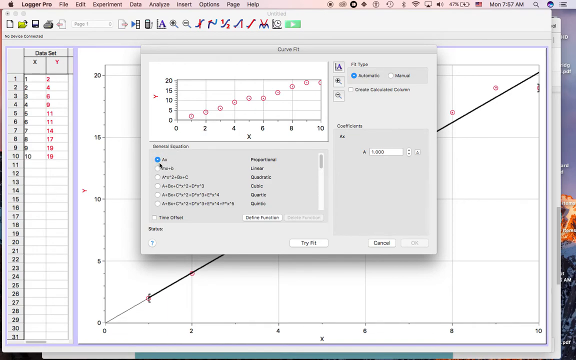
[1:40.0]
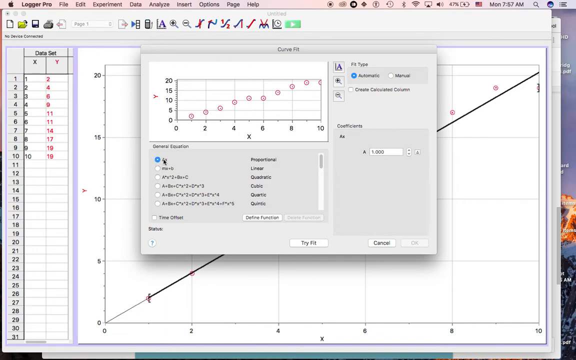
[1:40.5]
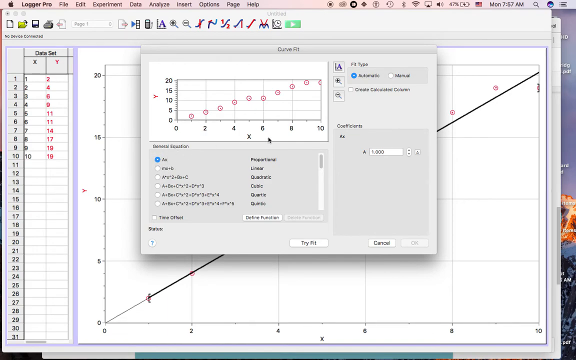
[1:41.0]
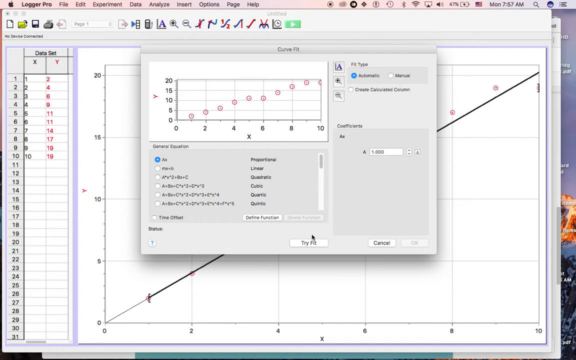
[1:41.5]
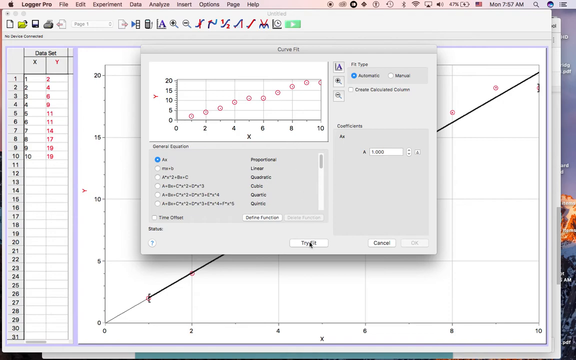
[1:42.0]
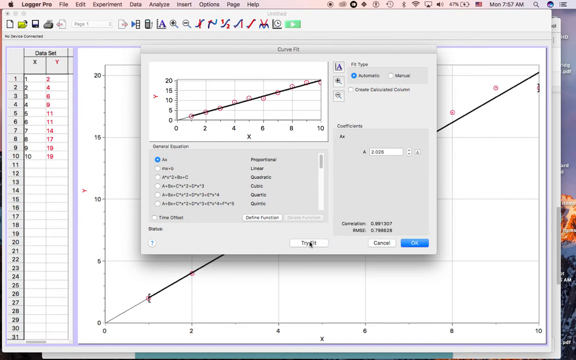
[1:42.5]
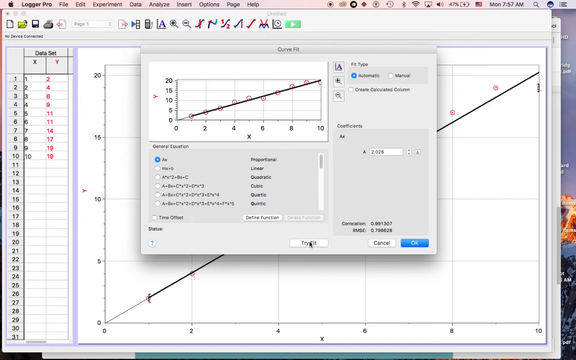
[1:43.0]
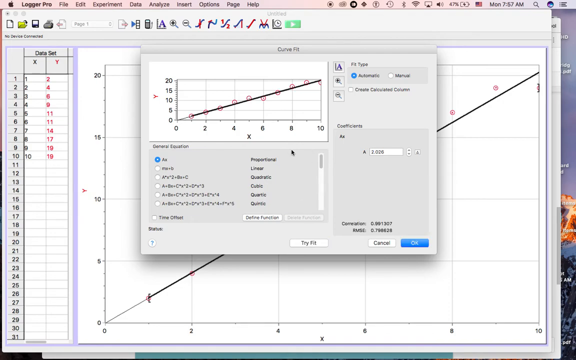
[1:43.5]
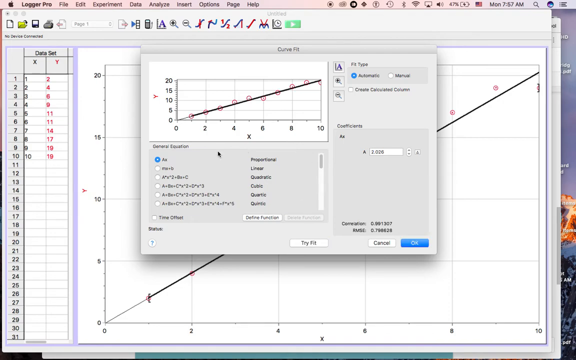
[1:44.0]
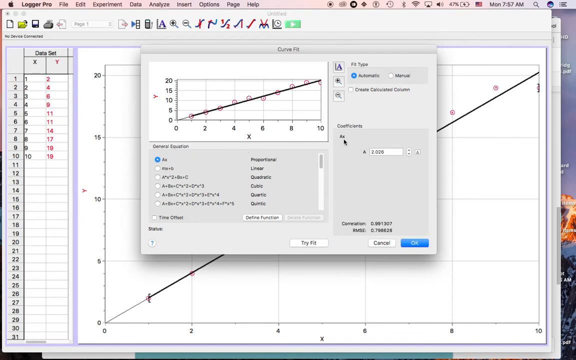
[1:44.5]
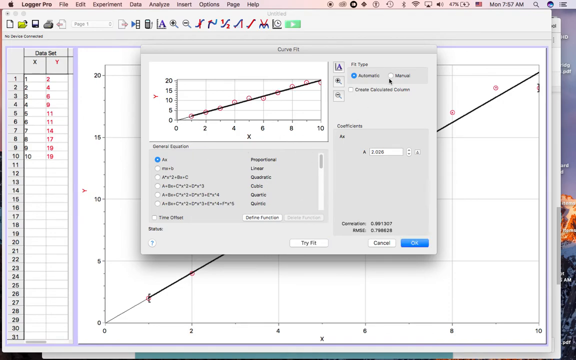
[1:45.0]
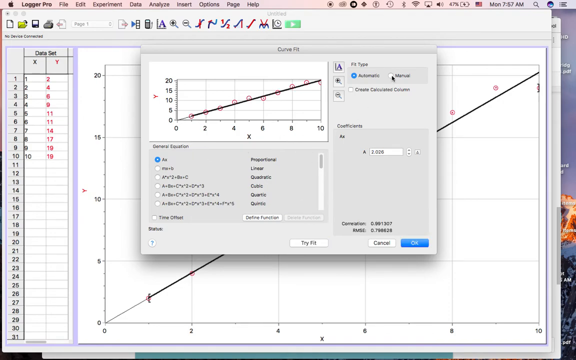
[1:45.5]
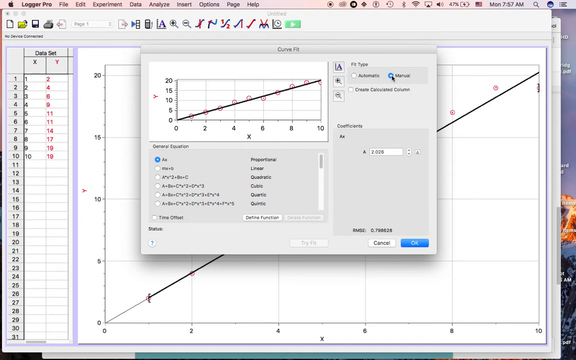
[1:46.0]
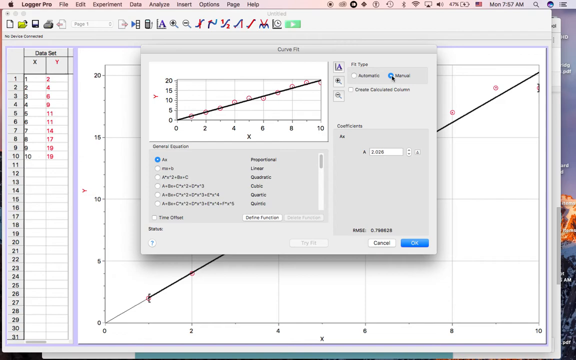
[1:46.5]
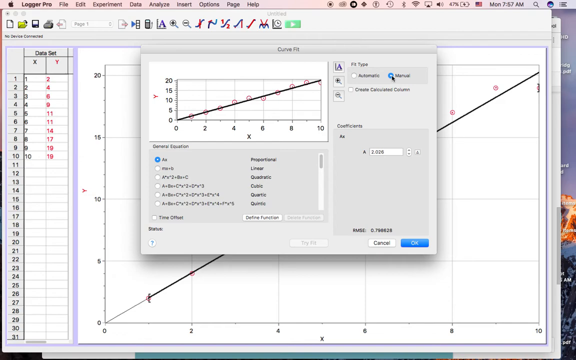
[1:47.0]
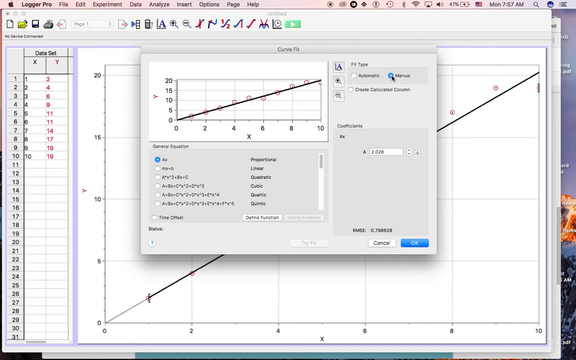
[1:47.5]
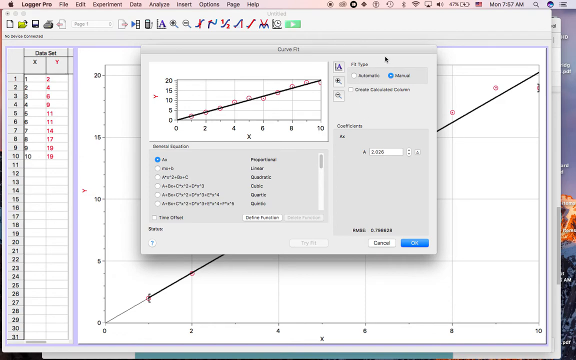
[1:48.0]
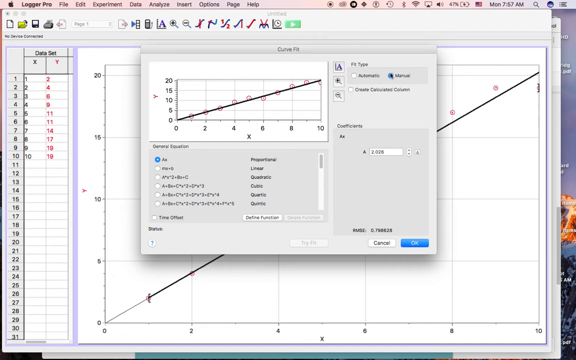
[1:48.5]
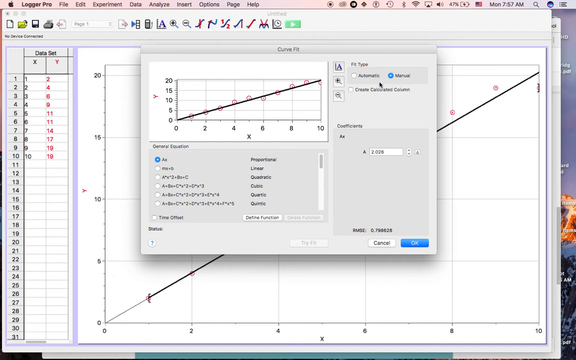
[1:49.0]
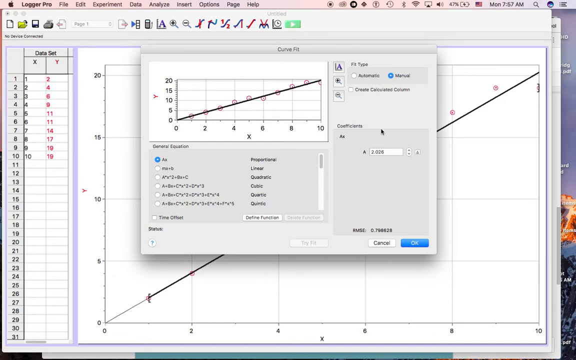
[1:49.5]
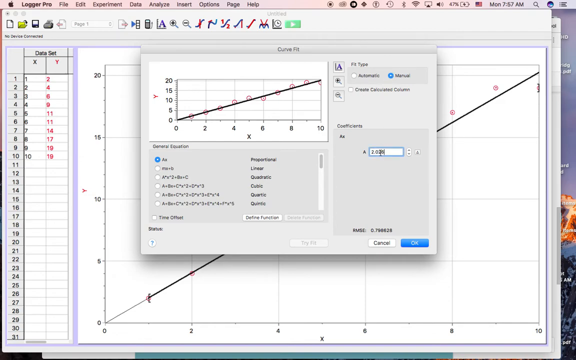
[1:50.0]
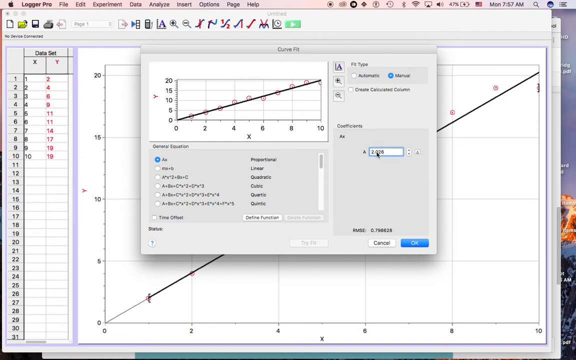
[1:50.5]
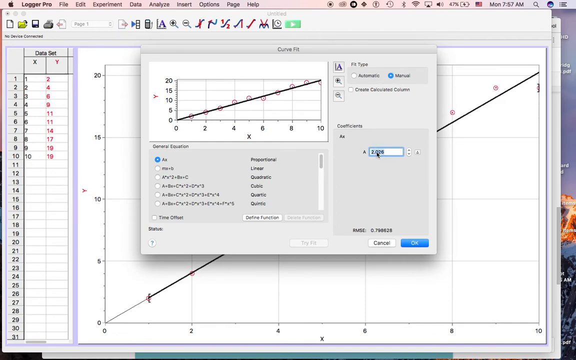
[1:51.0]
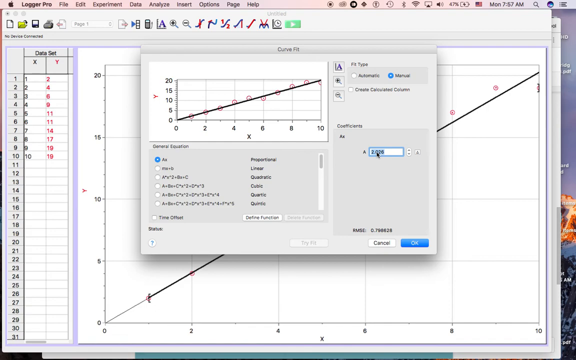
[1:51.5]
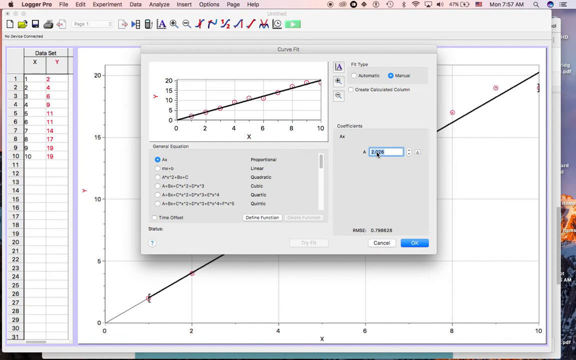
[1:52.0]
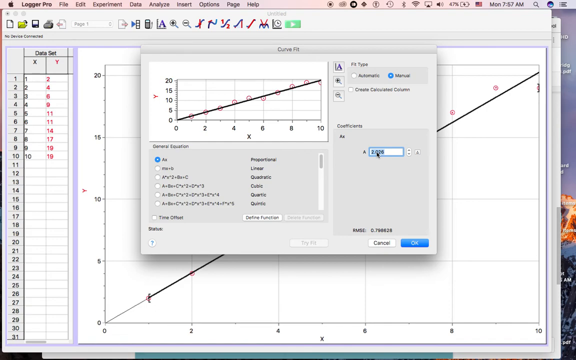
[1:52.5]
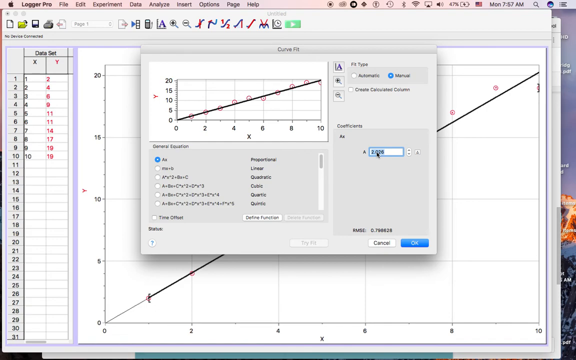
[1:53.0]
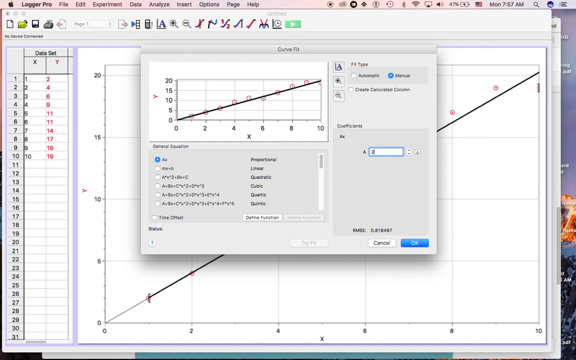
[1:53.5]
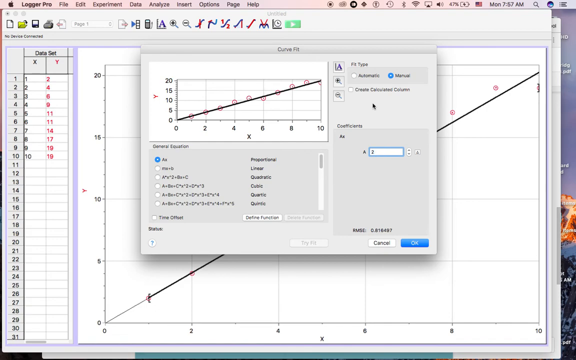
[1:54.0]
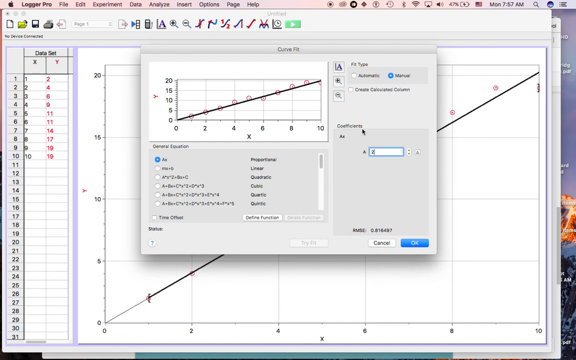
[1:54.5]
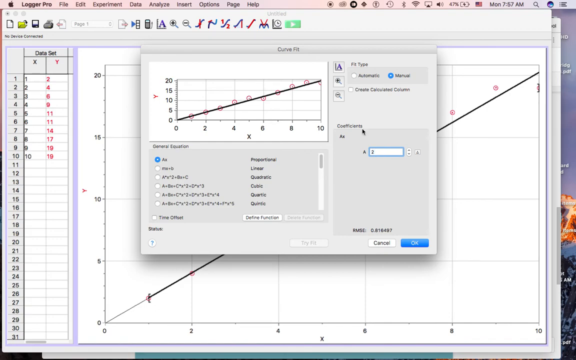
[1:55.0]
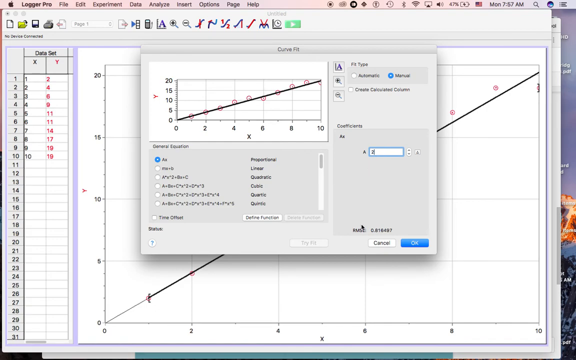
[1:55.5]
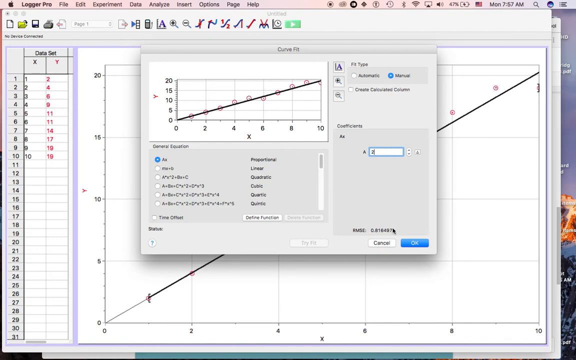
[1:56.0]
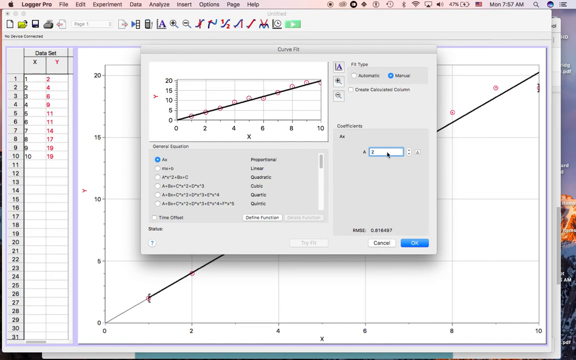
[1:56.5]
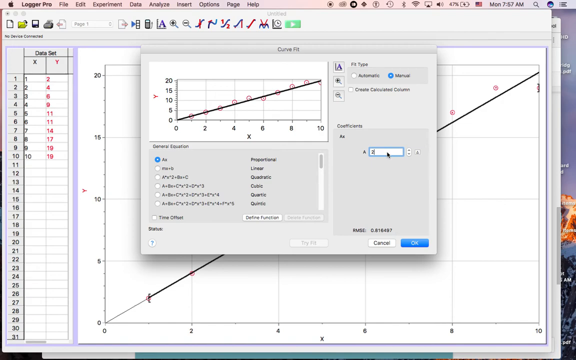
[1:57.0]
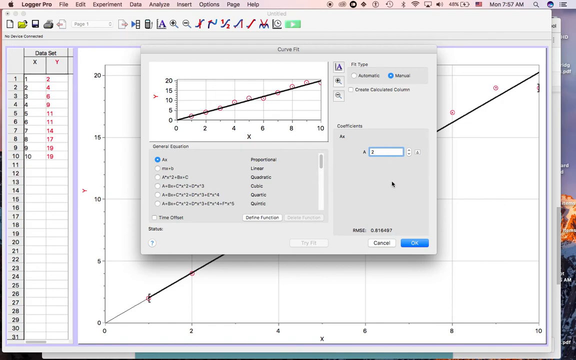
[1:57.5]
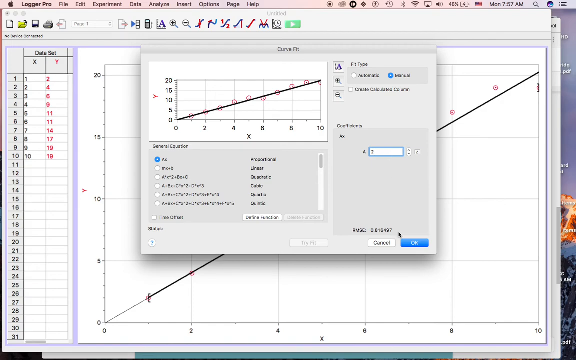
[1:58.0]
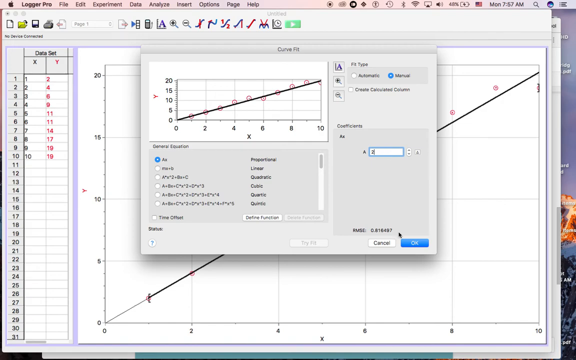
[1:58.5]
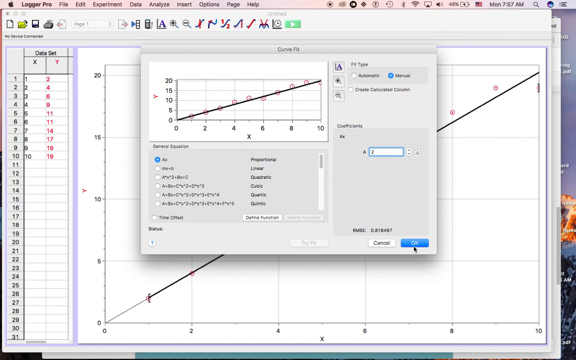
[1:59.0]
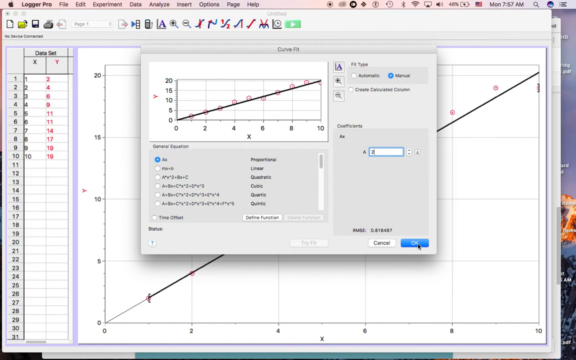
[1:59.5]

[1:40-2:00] The mouse pointer moves to the right and down, then clicks a button that says "Try Fit". As soon as it is clicked, the preview of the graph shows a straight diagonal line starting on the bottom left side and going upward to the right. The pointer goes to the left side and clicks a manual selection for the fit type. It then moves down to the input box on the right side containing the number 2.026. The user highlights the number and erases it so that only the number 2 is left. The cursor moves down to the bottom right corner of the curve fit window, and the user clicks OK.